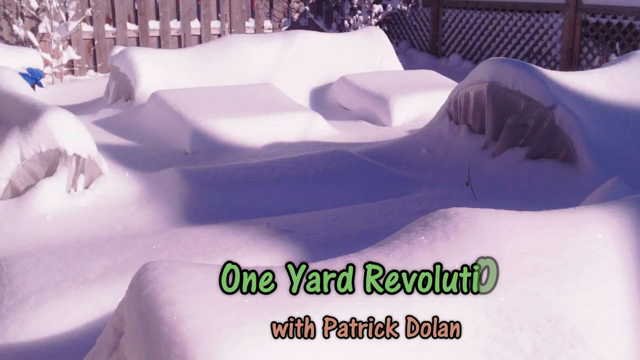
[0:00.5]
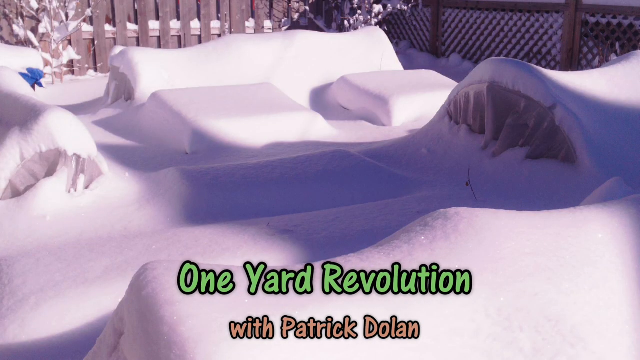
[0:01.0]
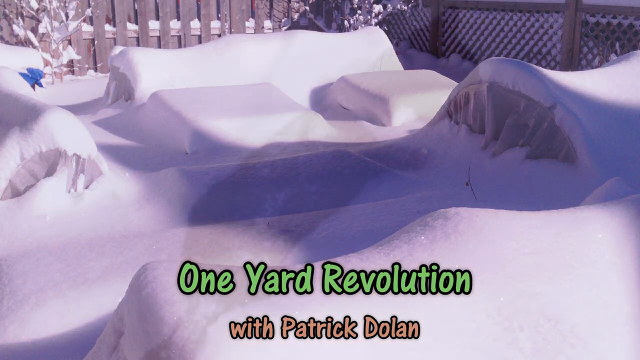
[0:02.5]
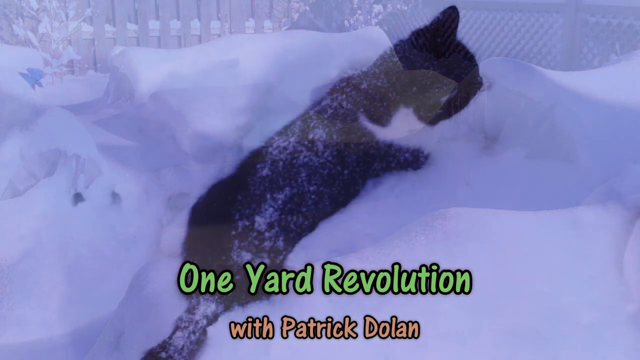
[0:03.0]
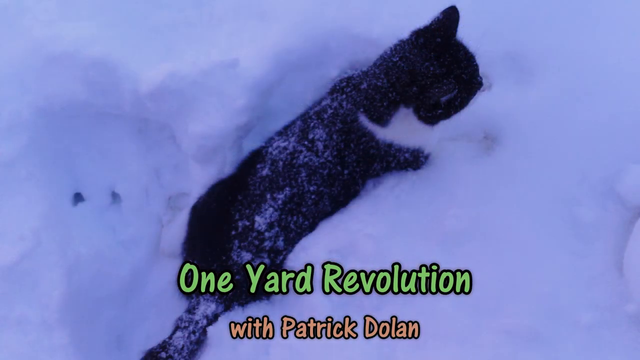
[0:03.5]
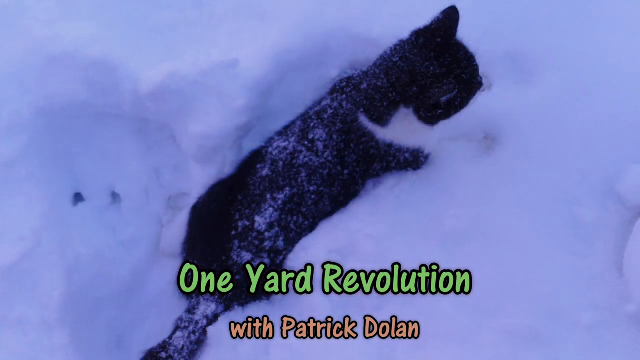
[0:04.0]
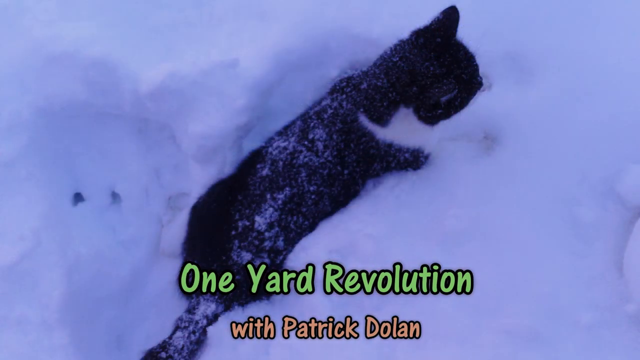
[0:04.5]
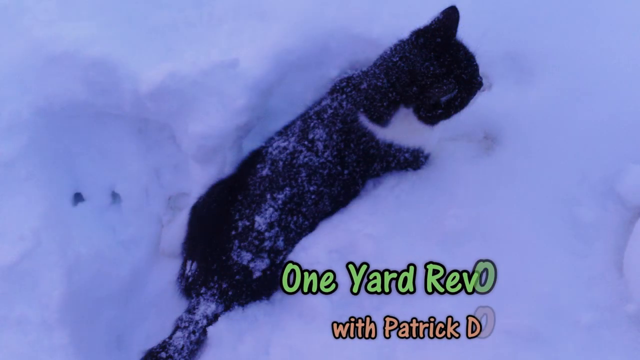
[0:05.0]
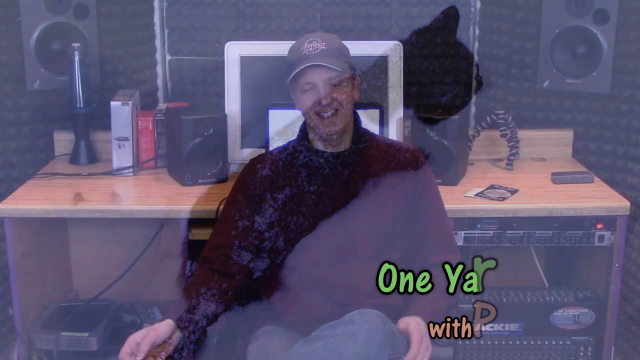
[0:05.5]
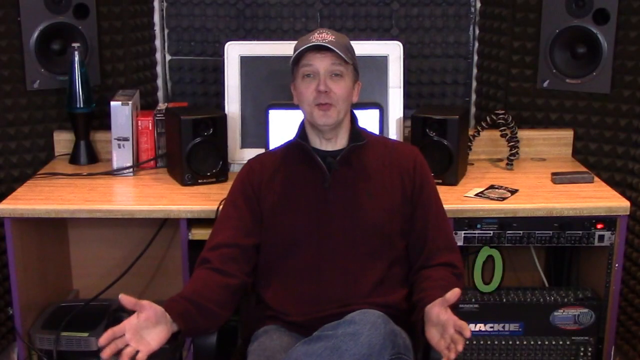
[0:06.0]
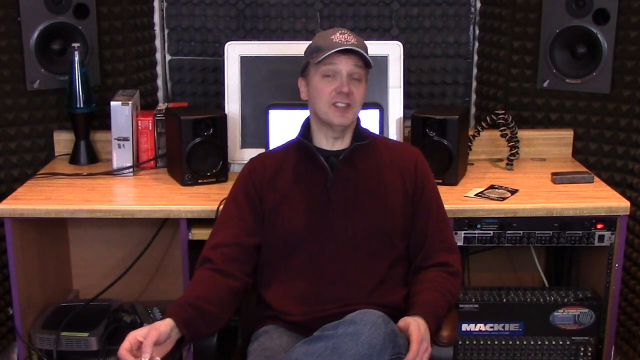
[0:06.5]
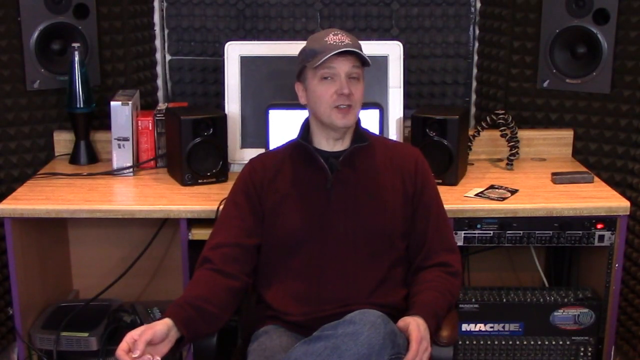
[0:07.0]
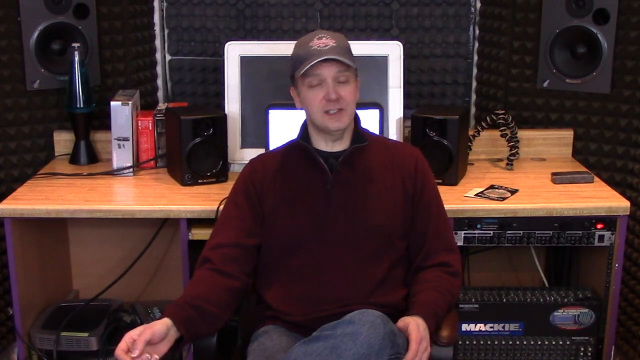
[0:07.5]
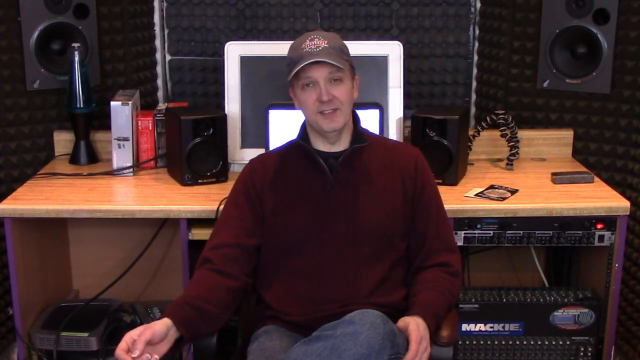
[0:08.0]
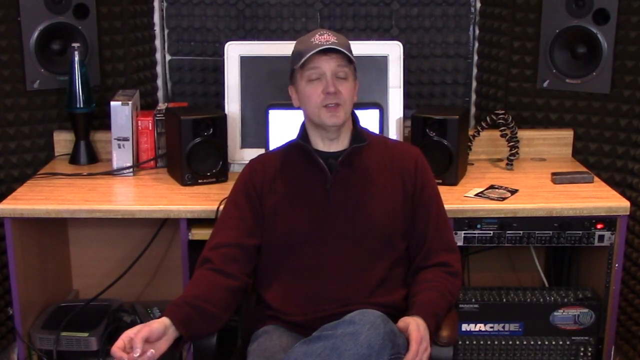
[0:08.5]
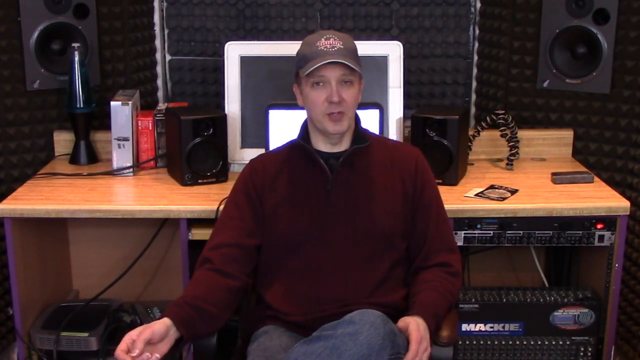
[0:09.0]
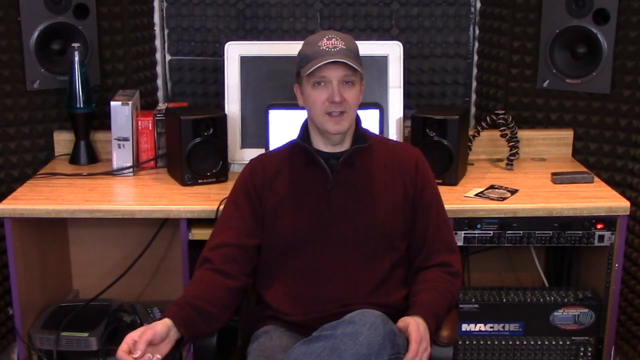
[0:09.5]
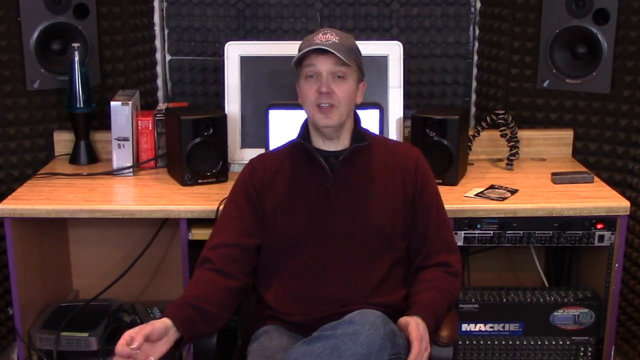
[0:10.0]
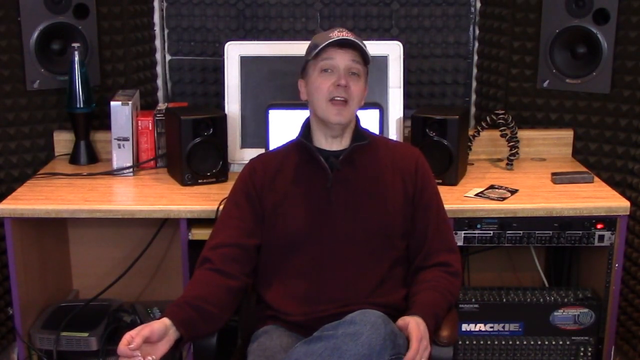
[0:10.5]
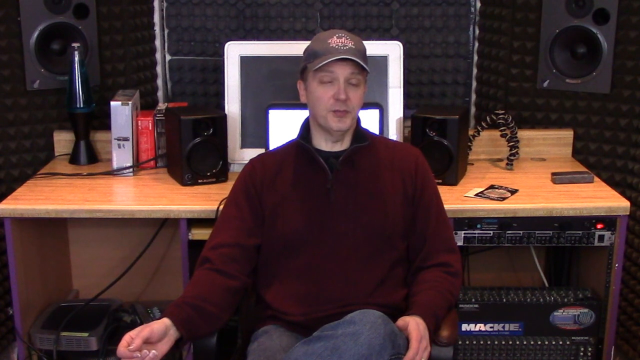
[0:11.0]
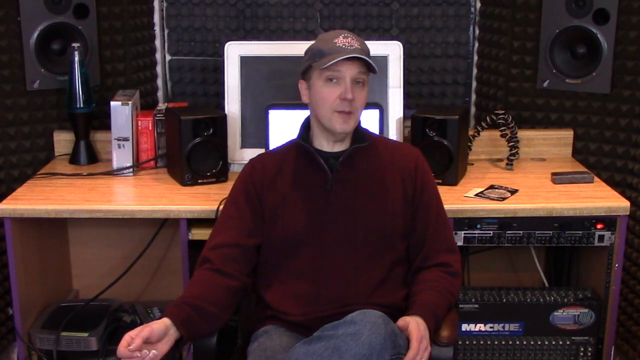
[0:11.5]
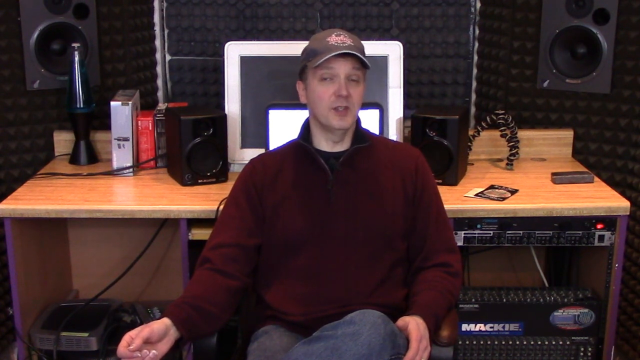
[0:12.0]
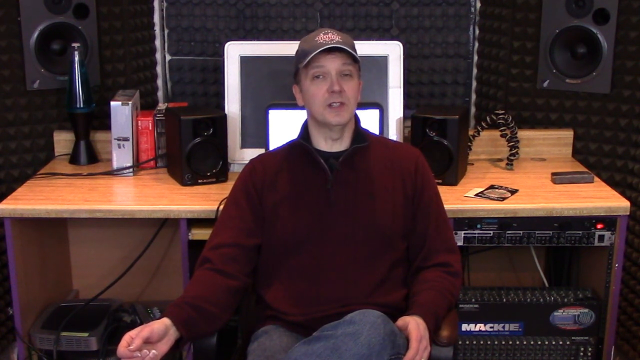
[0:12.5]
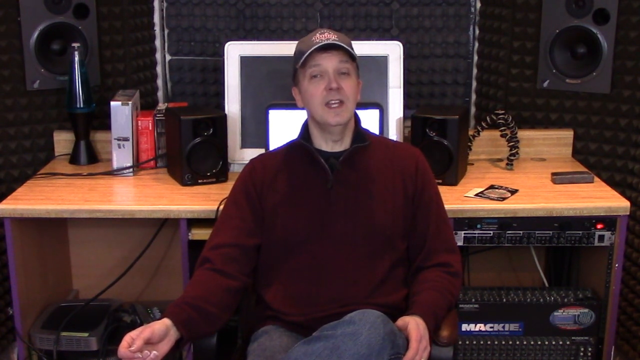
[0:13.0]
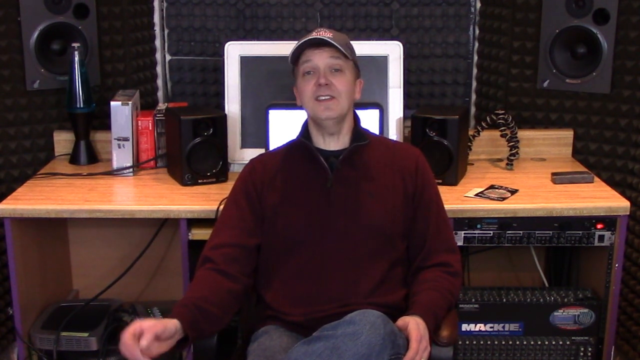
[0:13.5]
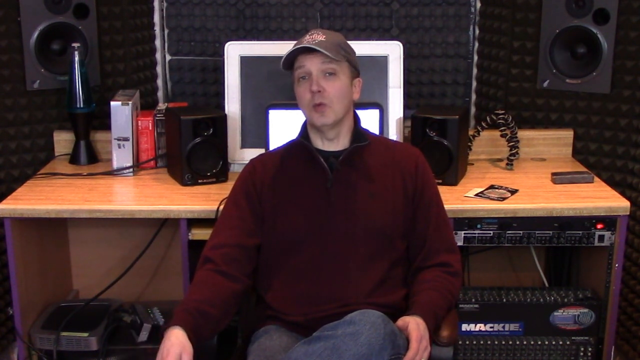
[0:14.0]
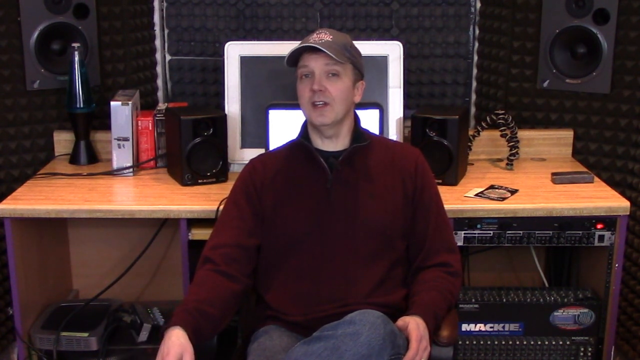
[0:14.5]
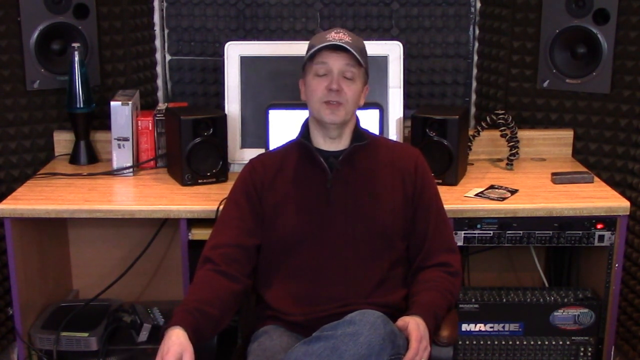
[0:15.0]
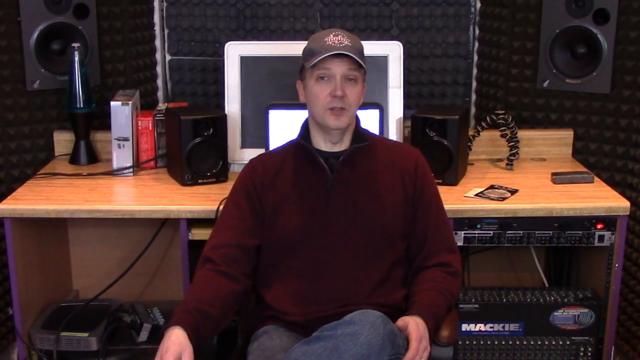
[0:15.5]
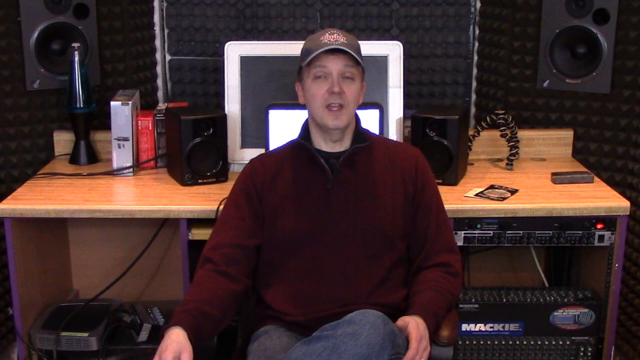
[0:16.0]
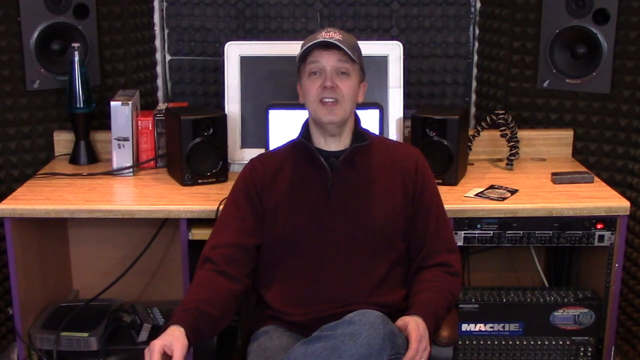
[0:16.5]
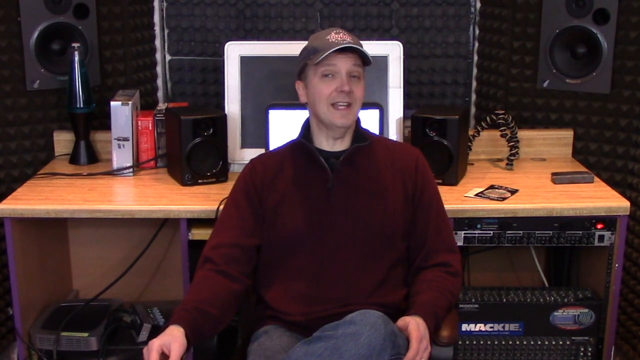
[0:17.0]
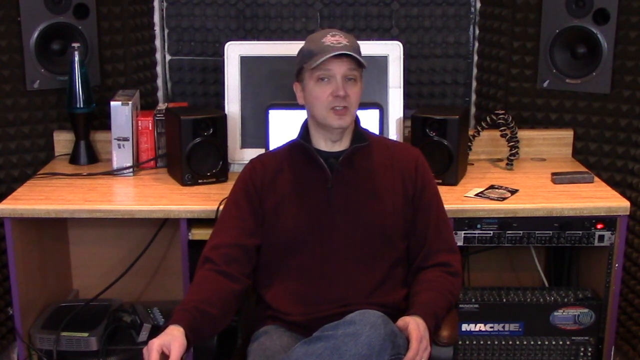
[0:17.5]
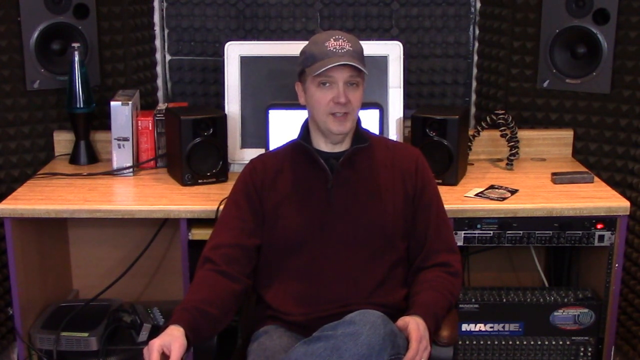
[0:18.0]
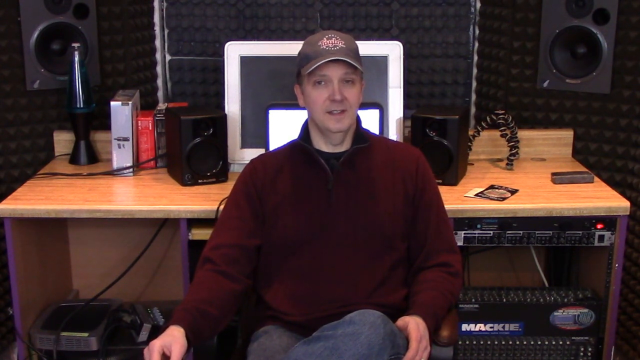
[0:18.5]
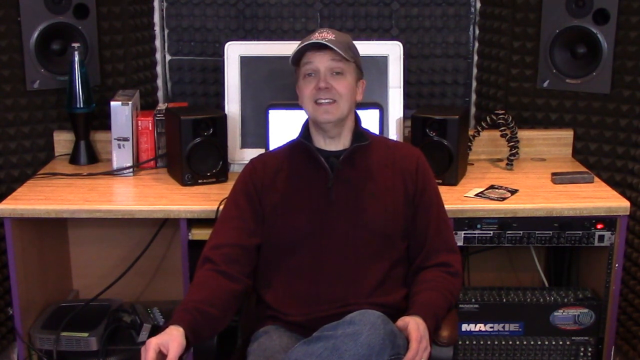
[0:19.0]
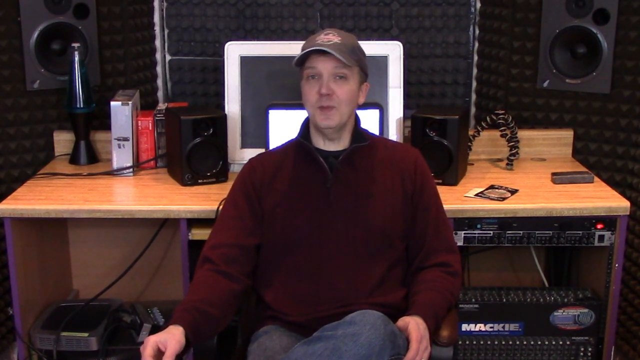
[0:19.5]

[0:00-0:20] The video, titled The One Yard Revolution, is presented by Patrick Dolan. It opens on an image of a snowbound garden. What appear to be seats are covered in something like tarpaulins, with deep snow over them and all around them, apparently at least six inches. It is a sunny day. Next, a black cat plays deep in the snow. The video then moves to Patrick in his studio. He faces the camera with his back turned to his wooden work desk, which has a laptop, a computer monitor and speakers on it. There are more speakers behind the desk, sound equipment made by Mackie is on the floor, and a black screen is behind the desk; the screen has a sort of dimpled effect, possibly to control sound levels. Patrick is a middle-aged man wearing a burgundy fleece, a grey baseball cap and blue jeans. He talks to the camera, gestures with his right hand and raises his eyebrows, though he is not very expressive.